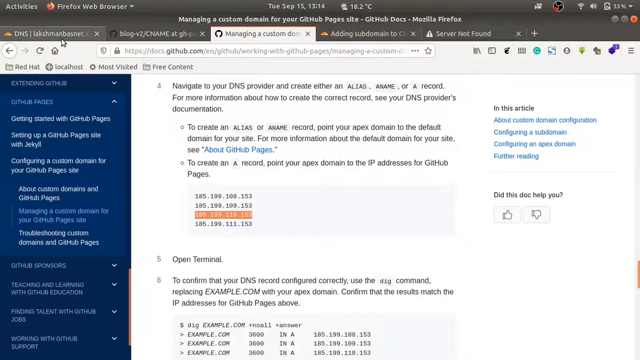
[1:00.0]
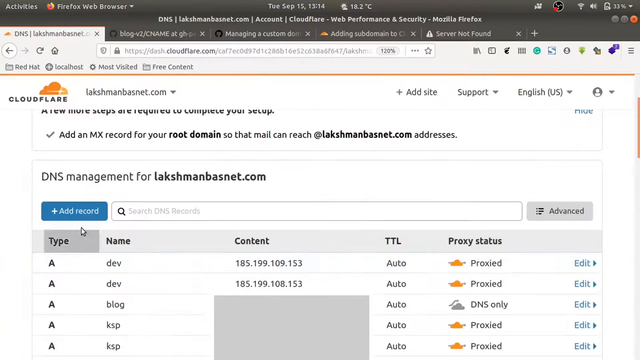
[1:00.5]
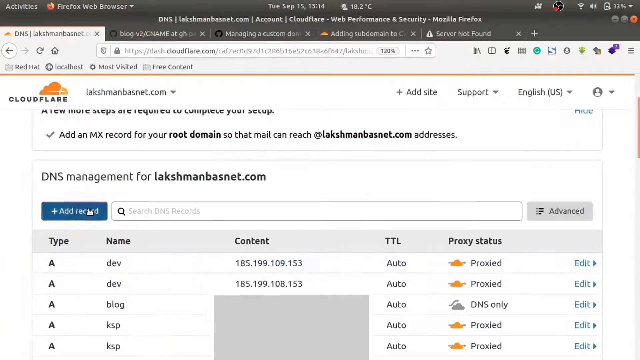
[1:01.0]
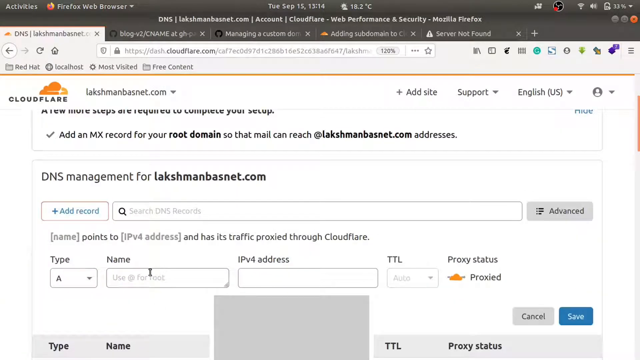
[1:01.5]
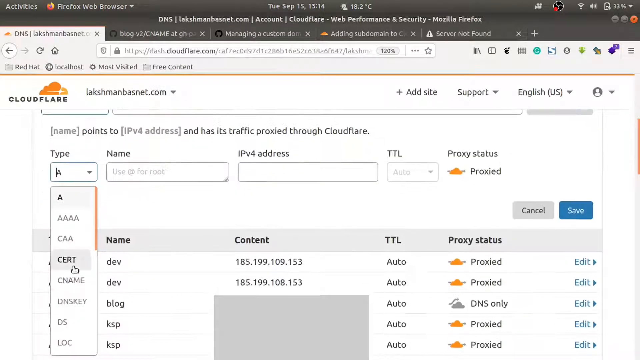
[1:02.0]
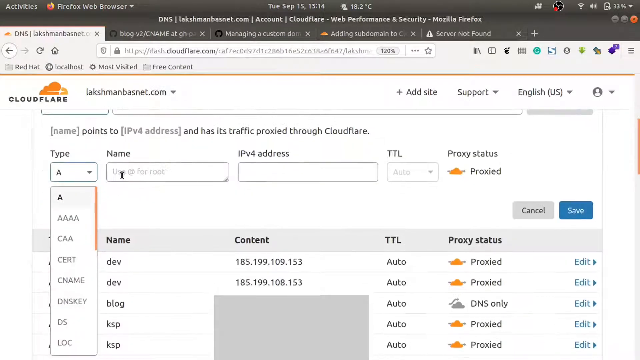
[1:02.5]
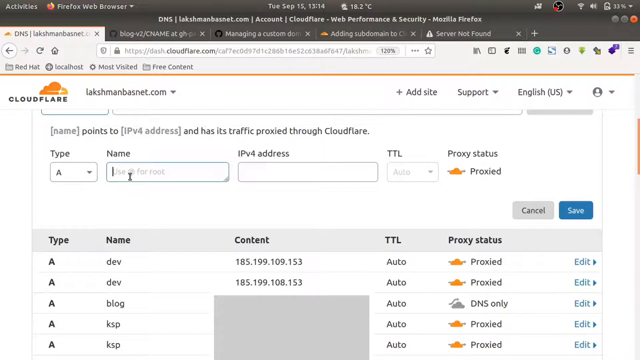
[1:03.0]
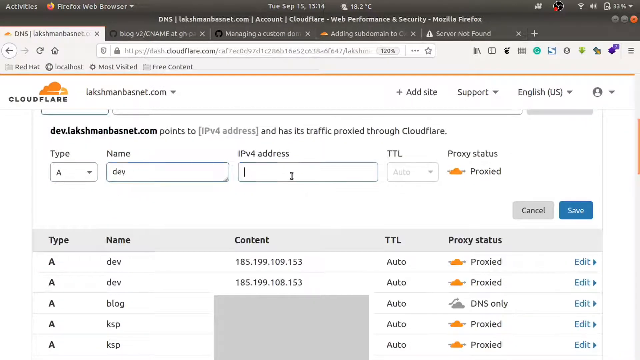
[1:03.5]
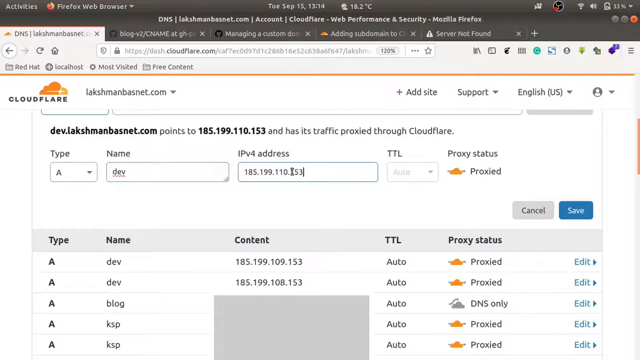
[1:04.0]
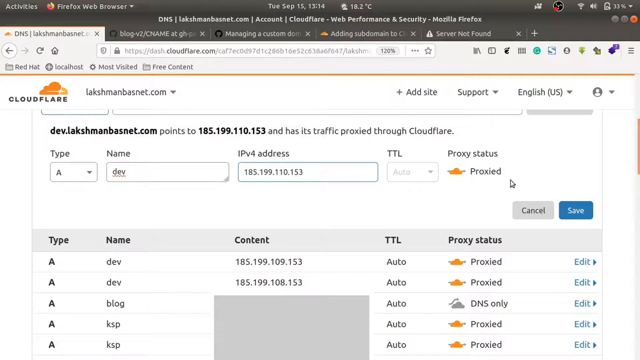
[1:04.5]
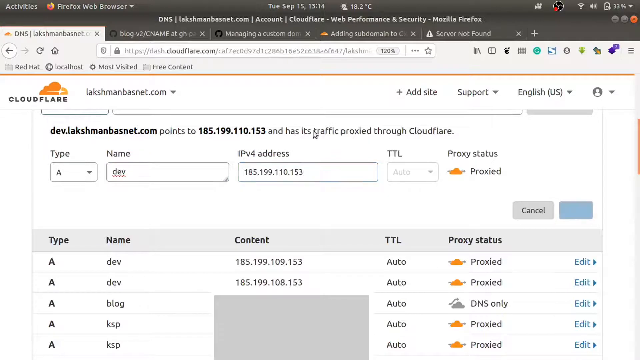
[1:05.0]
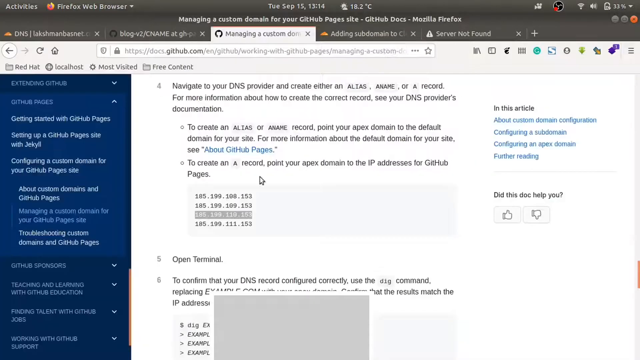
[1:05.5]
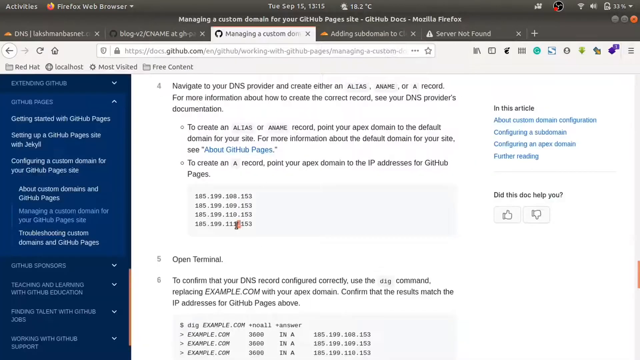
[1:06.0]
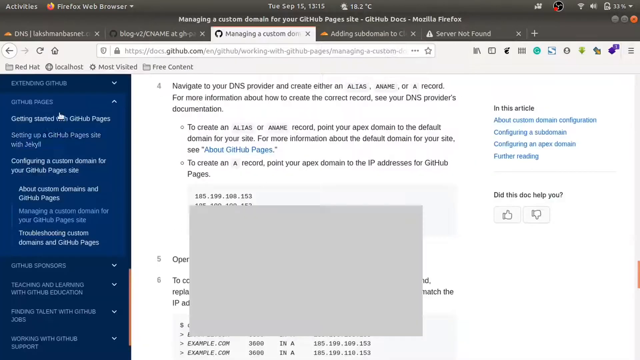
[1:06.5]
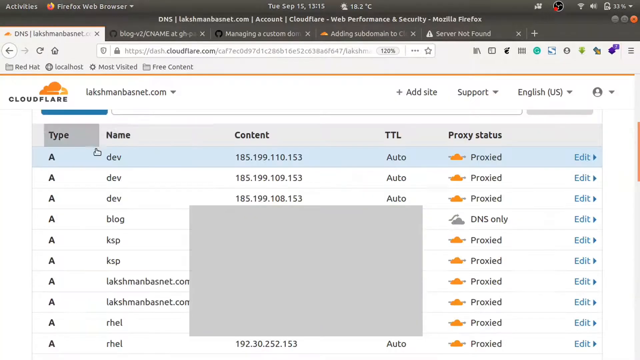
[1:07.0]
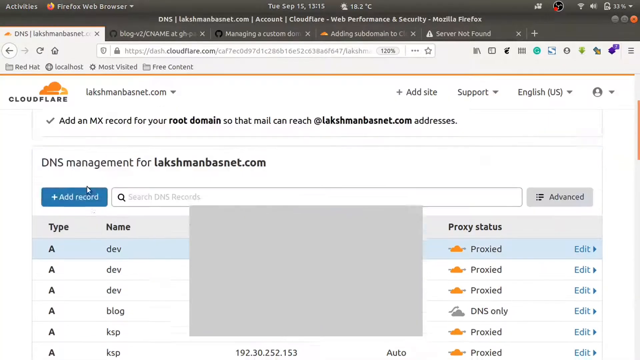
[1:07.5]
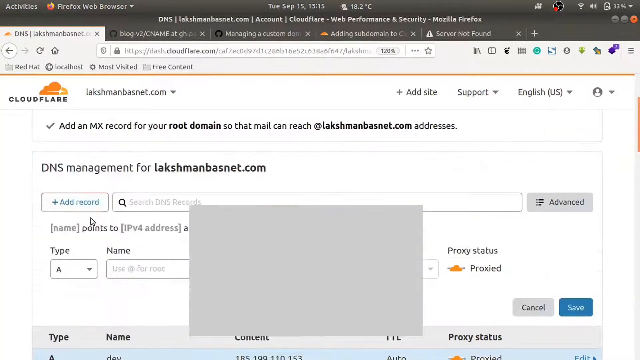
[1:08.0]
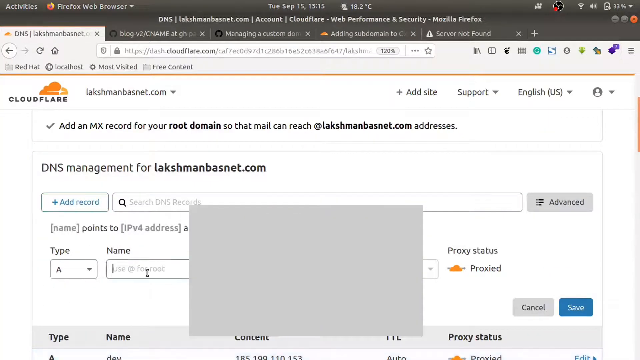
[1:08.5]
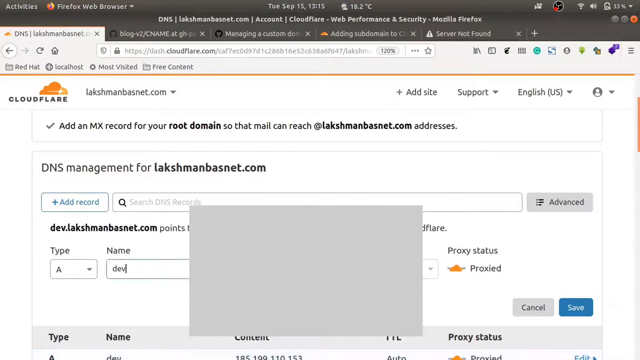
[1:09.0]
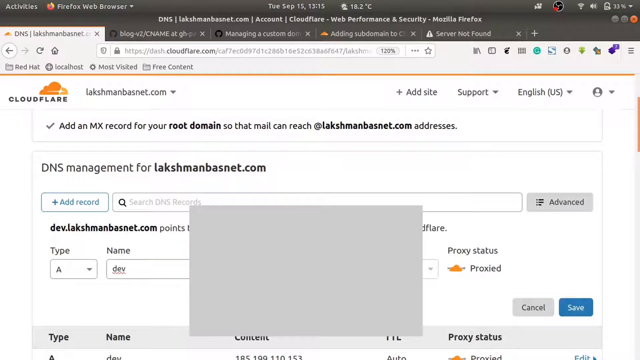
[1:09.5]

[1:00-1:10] He copies the code and puts it into the IPv4 address field, with "dev" as the name, and clicks add. The TTL is auto and the proxy status is proxied; text says lakshmanbasnet points to this IP address and has its traffic proxied through Cloudflare. He goes back to GitHub, copies the last IP address, and adds another record with the name dev and another IP address, then clicks save. He is using Linux.